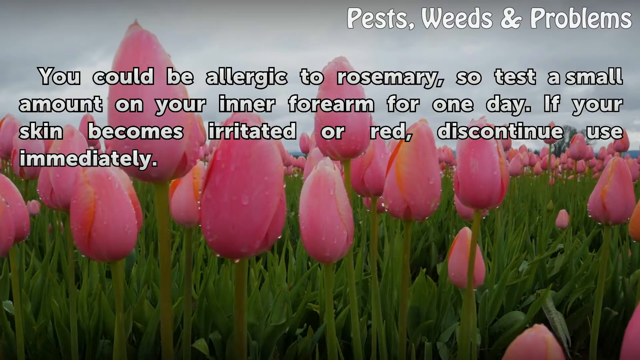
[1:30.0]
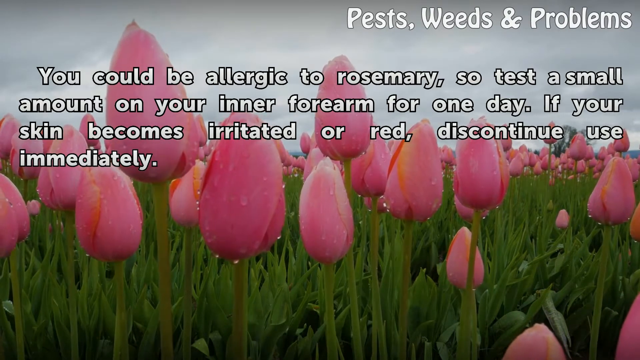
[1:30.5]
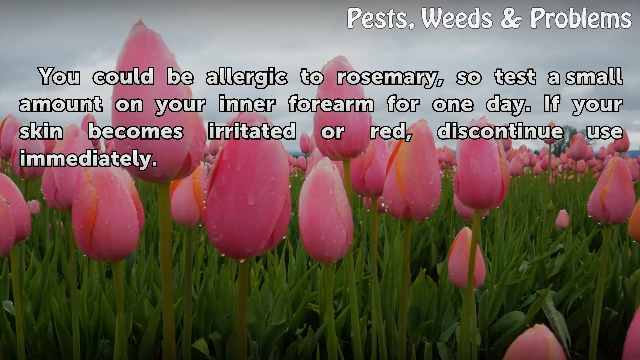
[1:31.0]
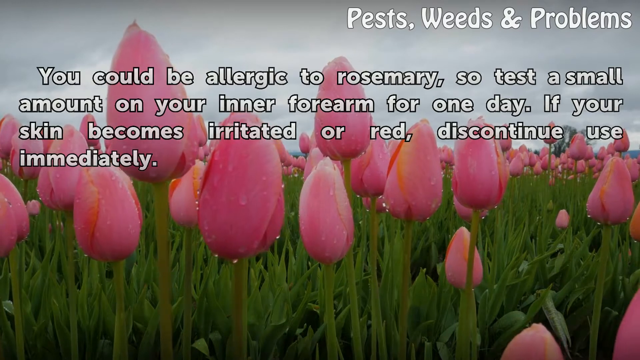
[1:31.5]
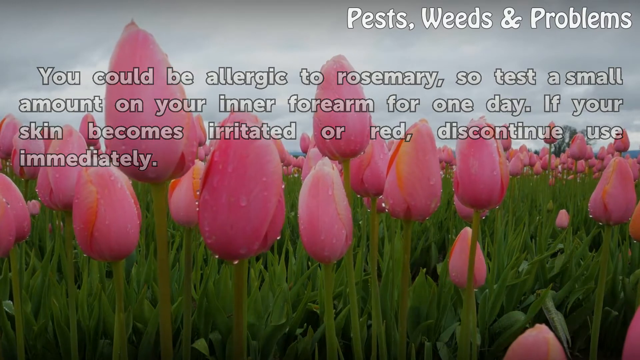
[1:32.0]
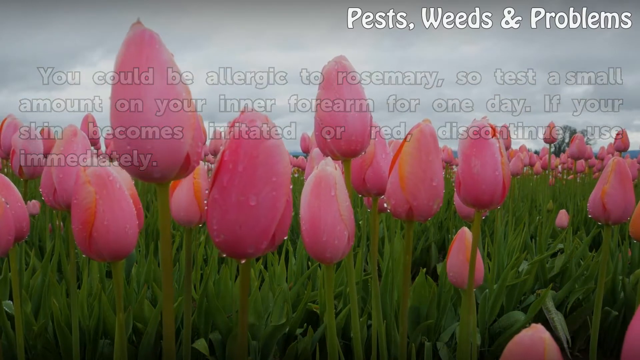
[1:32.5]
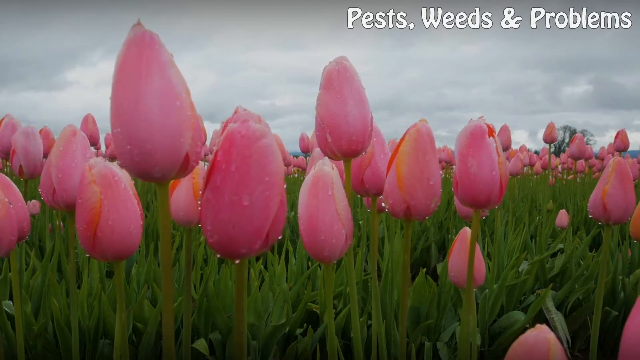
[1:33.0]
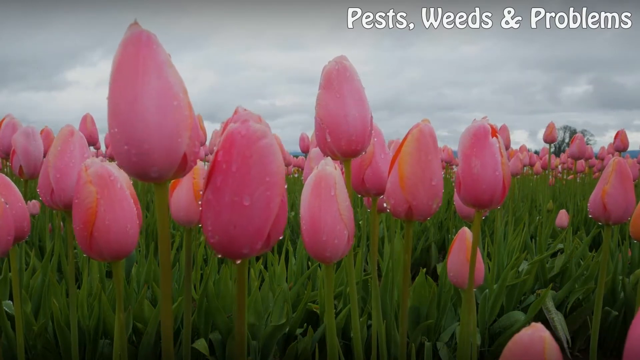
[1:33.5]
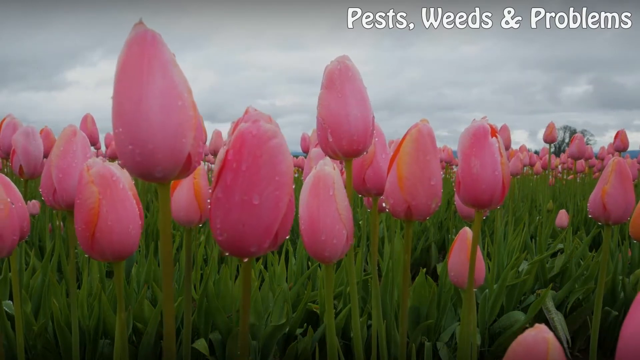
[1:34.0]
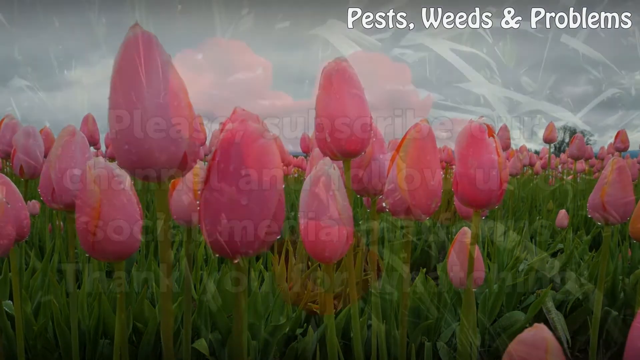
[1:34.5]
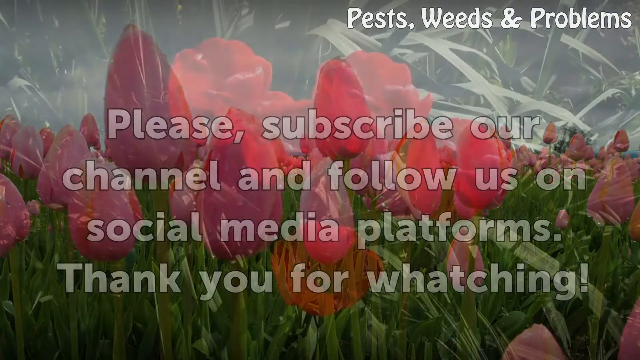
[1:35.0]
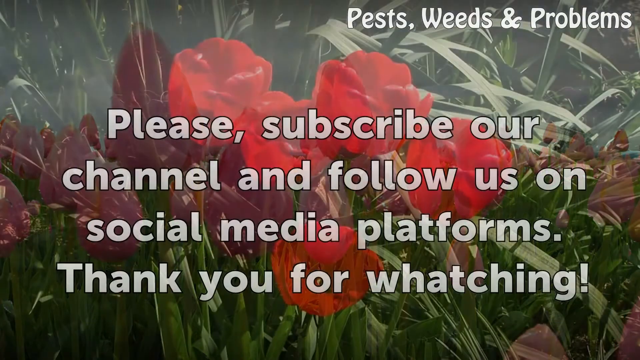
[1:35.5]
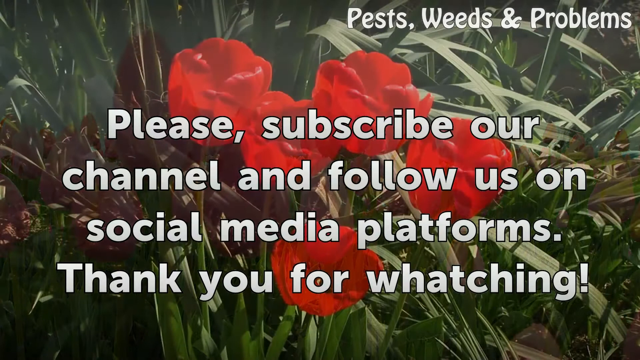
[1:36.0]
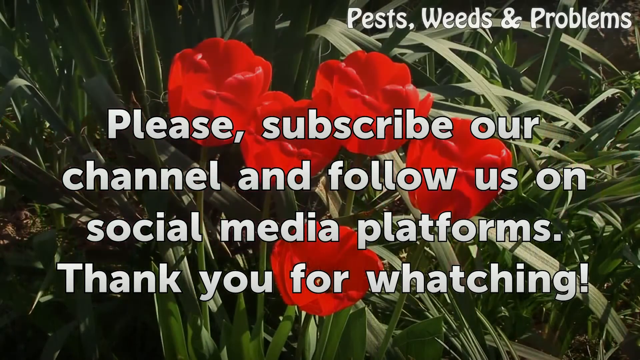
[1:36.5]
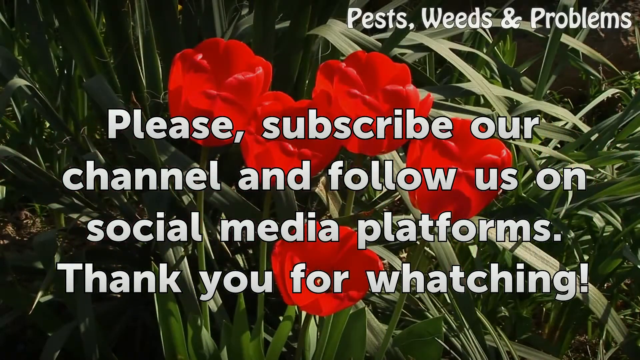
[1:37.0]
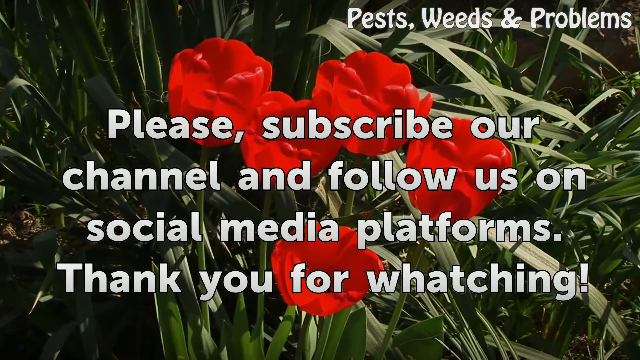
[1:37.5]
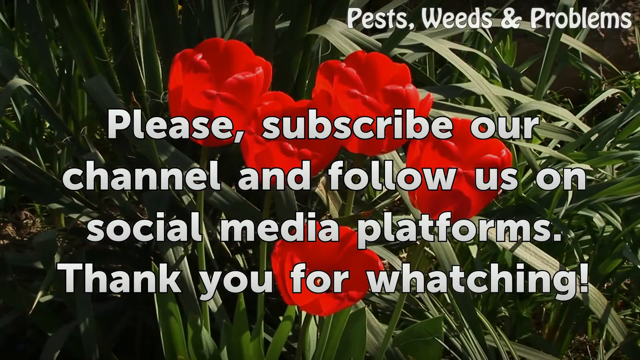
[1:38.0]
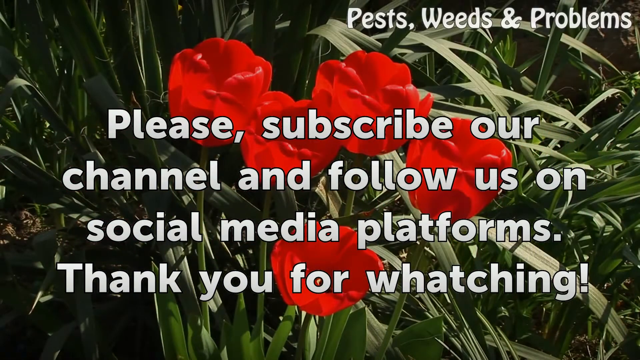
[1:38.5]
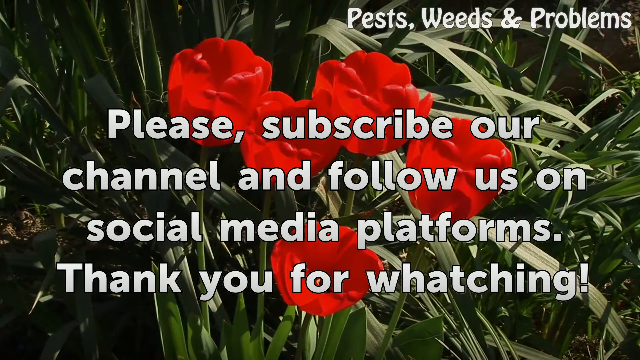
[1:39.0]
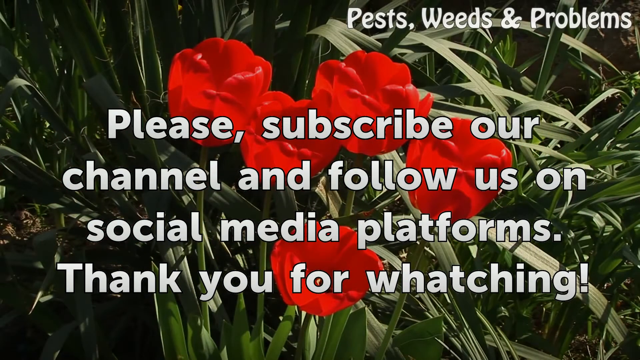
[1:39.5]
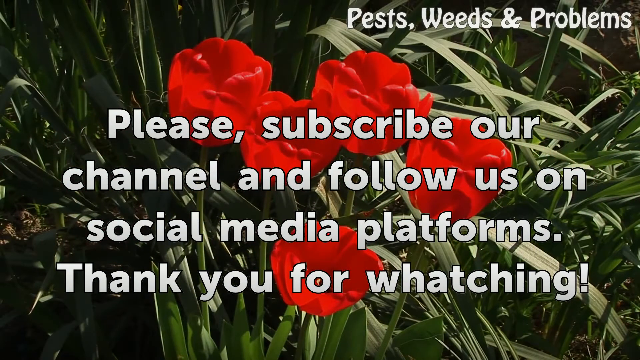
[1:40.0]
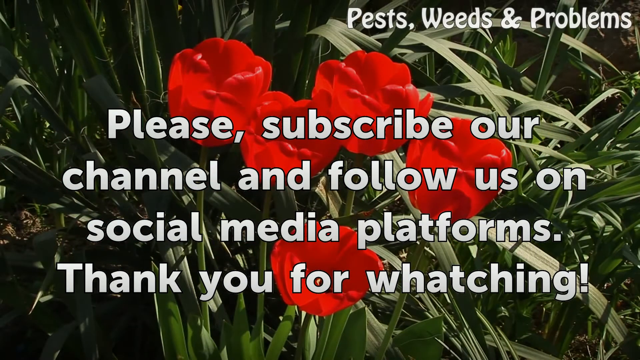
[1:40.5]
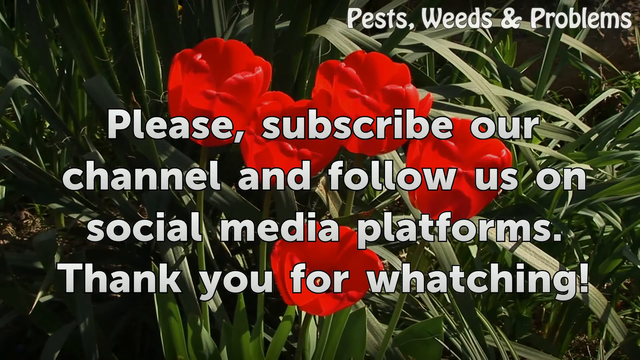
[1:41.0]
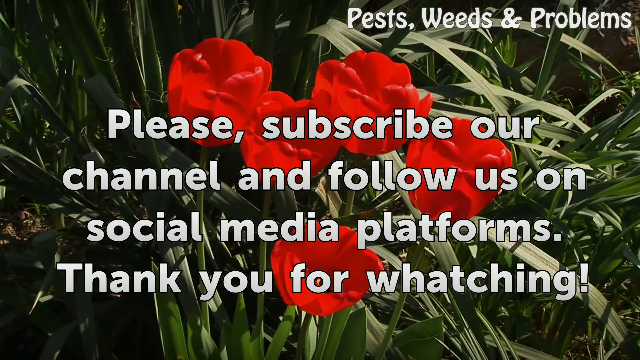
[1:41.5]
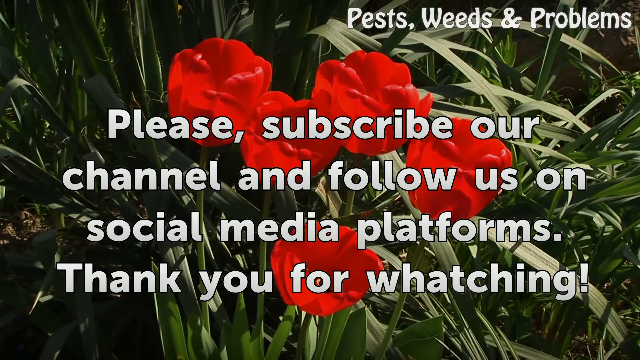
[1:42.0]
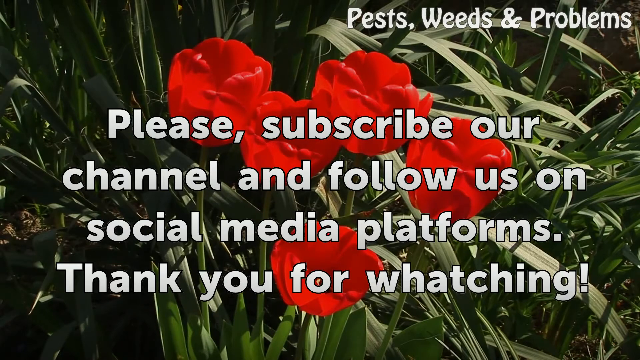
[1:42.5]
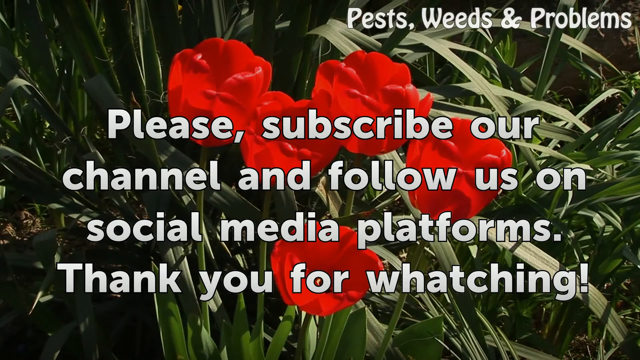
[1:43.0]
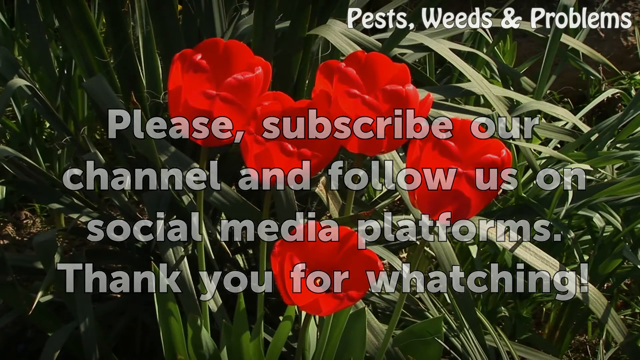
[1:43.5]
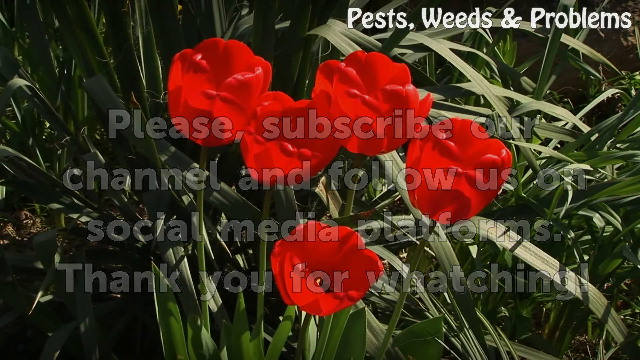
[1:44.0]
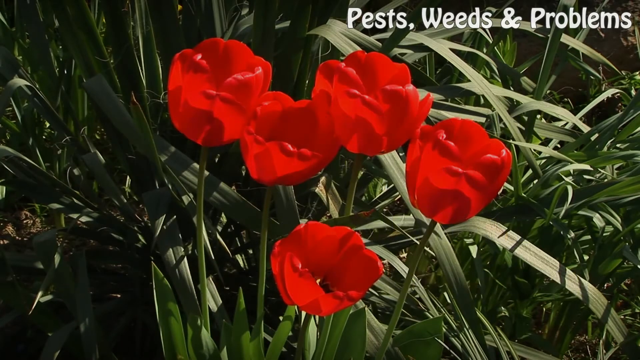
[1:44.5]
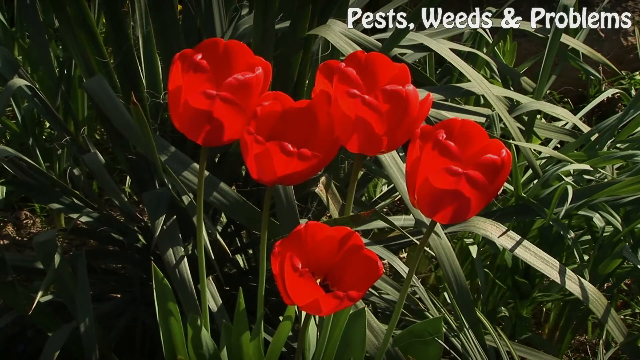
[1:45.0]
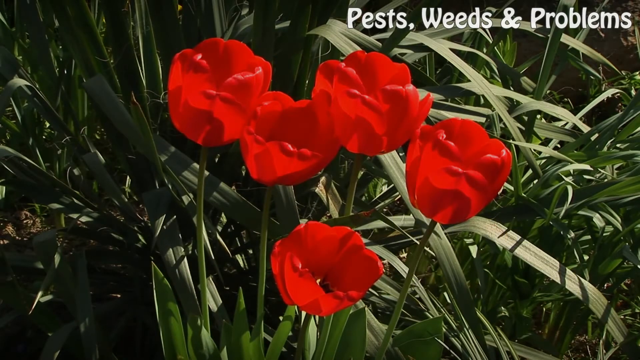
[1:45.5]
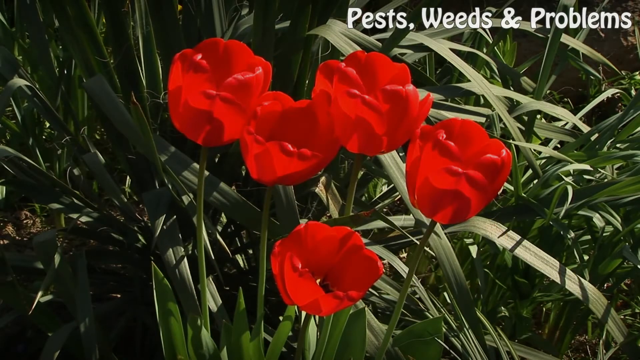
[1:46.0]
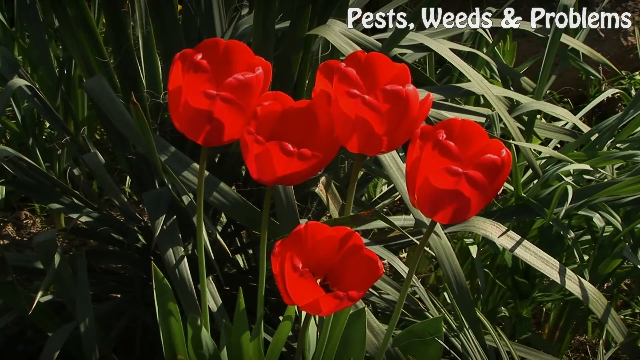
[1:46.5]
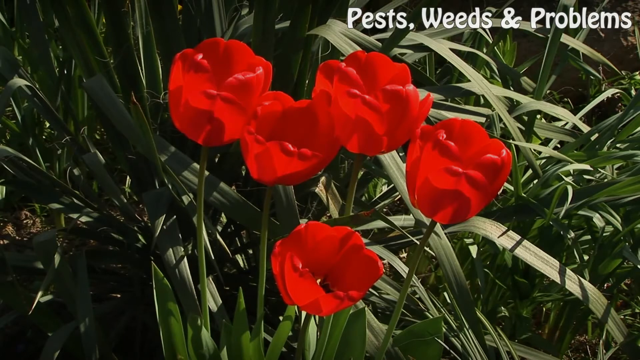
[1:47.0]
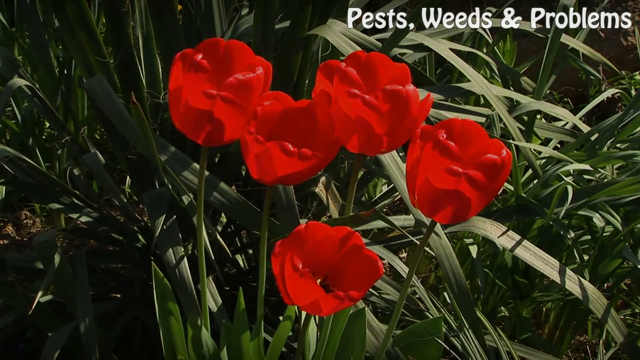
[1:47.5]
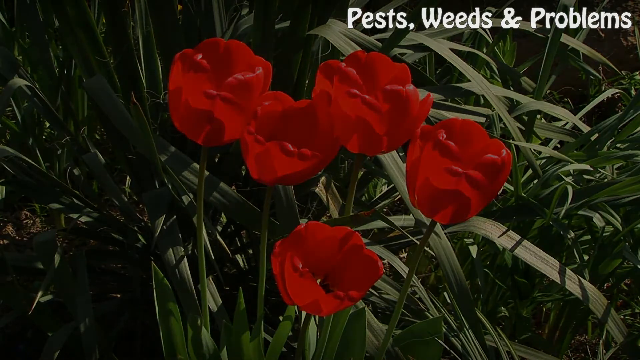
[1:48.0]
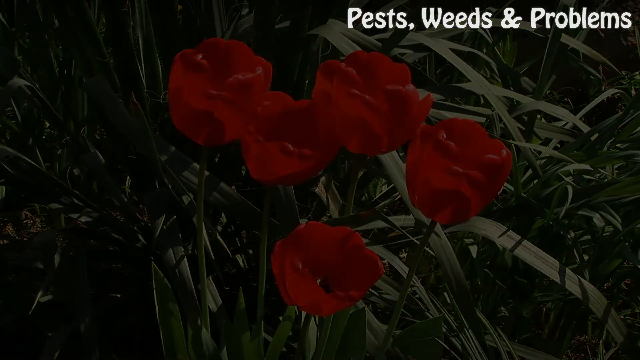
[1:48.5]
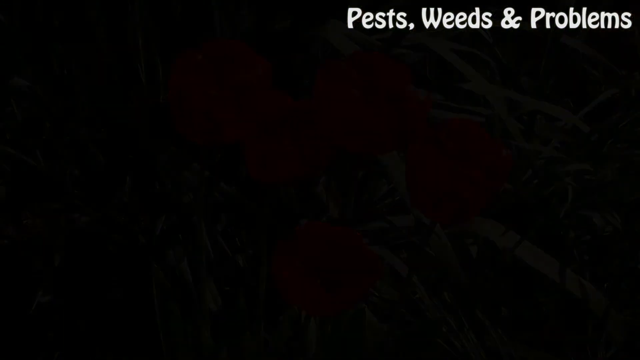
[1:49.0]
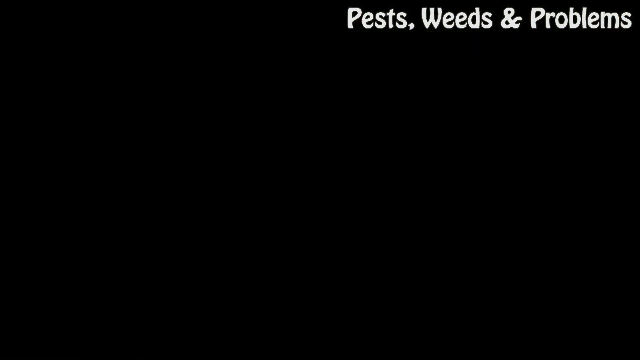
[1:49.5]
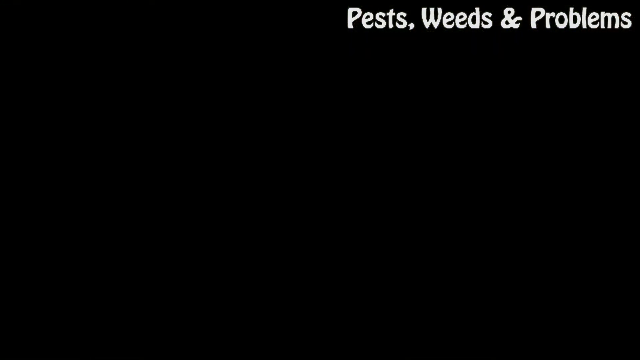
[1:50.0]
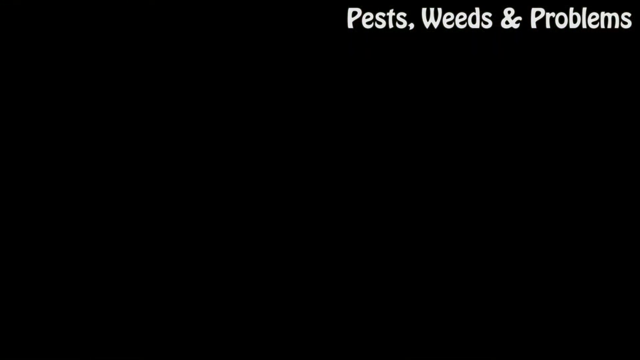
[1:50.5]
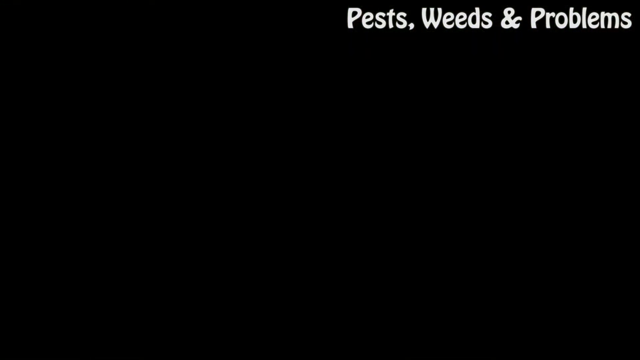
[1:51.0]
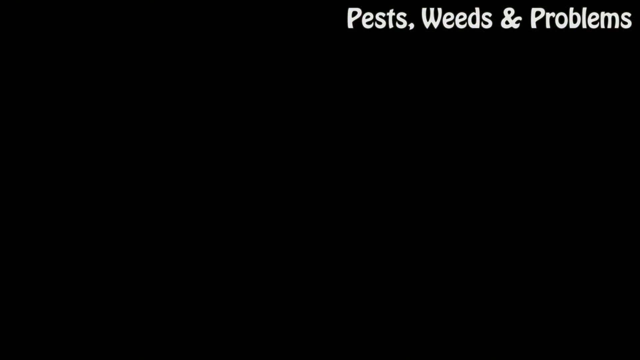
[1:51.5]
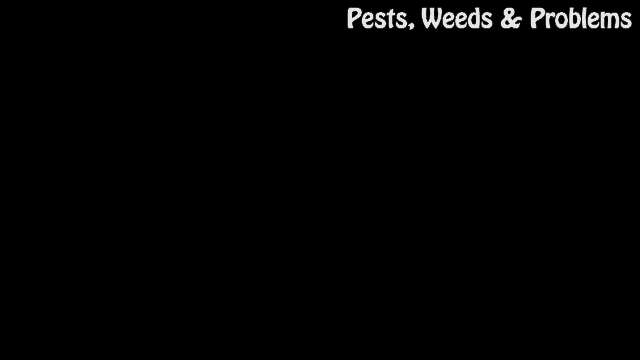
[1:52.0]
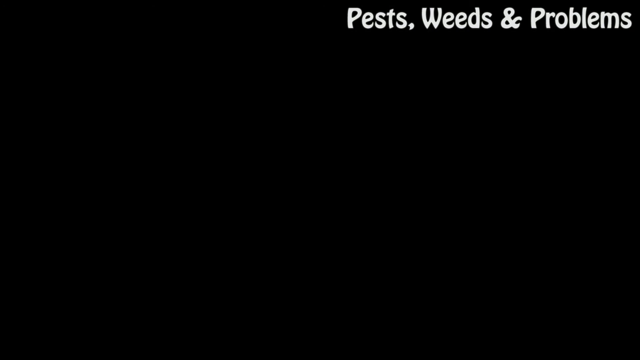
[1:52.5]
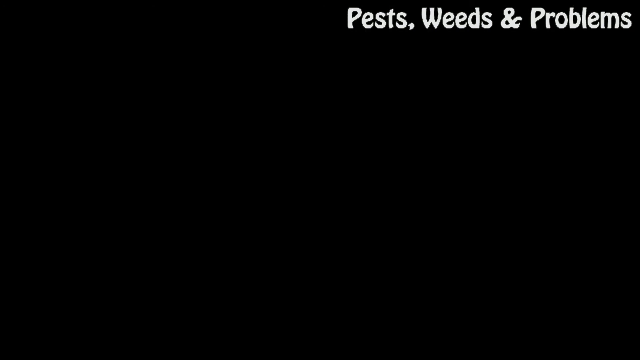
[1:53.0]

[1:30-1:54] The text fades off, and more dark, stormy-looking clouds are visible, especially across the bottom portion. Everything then fades out to five red flowers in the center, spaced out a little, with green grass all around them. The flowers are arranged with one at the bottom, one up to the right about two inches, one directly up to the left, and two more straight to the left of it; the ones on the top row are all touching. The grass is a little darker on the left side than the right, as if the sun is shining down on the right side leaves. Across the center, white text reads "please subscribe our channel and follow us on social media platforms. Thank you for watching." The text then fades away and the background fades to black, though "pests, weeds, and problems" remains in the top right corner.